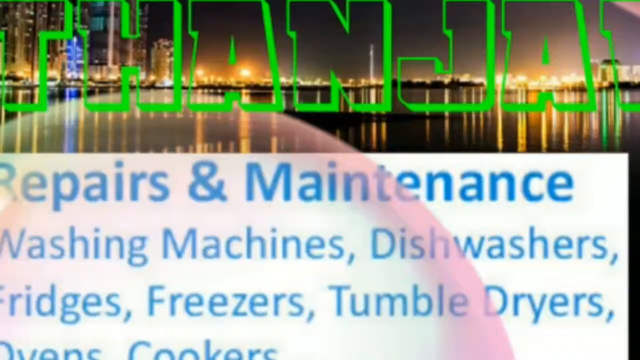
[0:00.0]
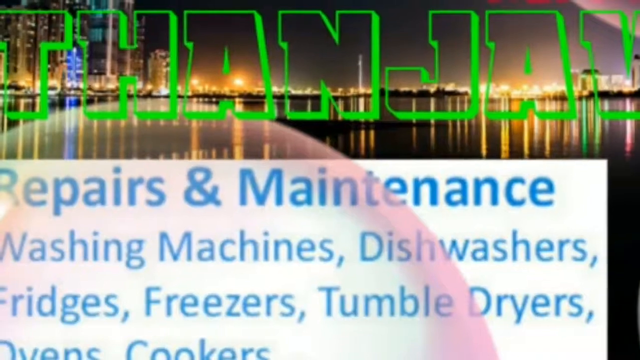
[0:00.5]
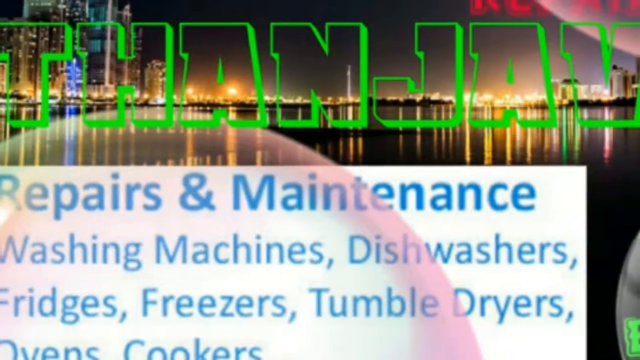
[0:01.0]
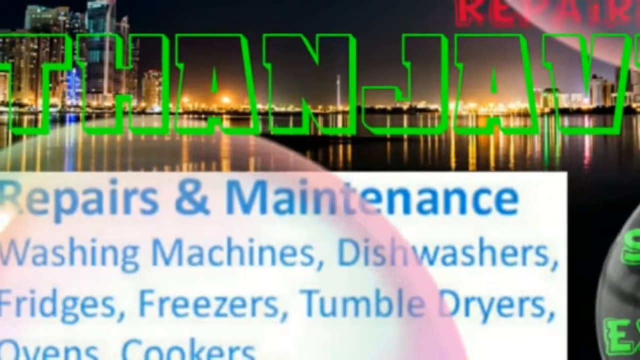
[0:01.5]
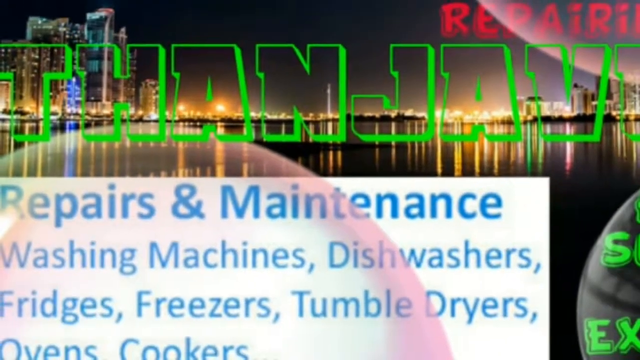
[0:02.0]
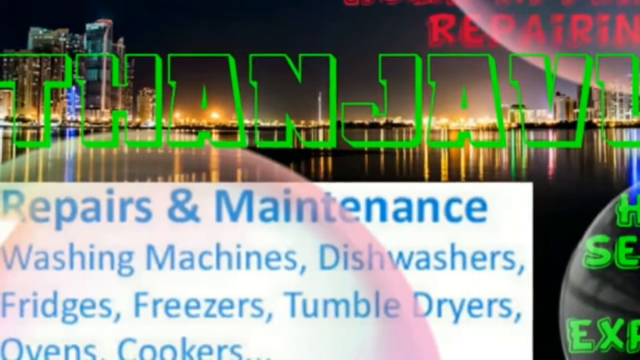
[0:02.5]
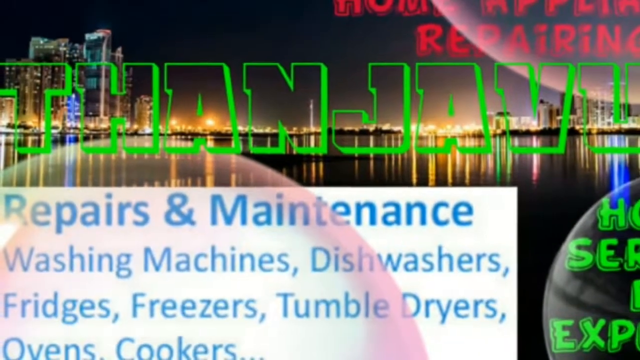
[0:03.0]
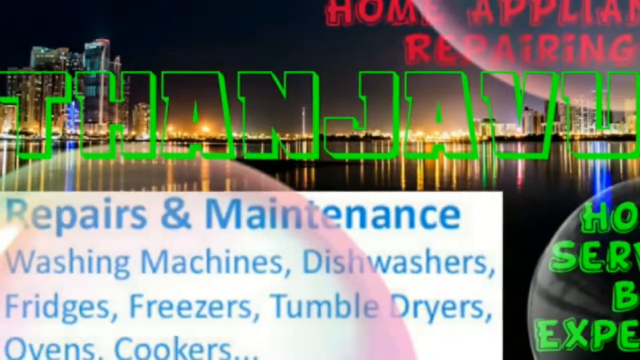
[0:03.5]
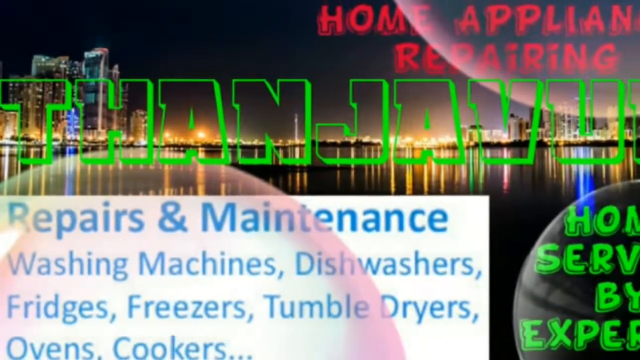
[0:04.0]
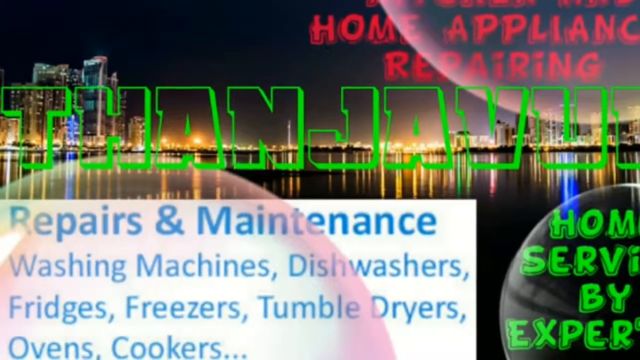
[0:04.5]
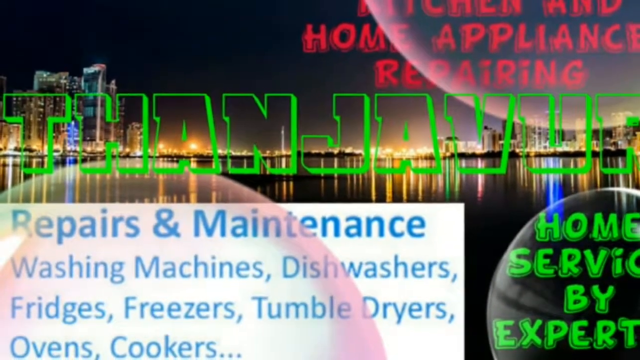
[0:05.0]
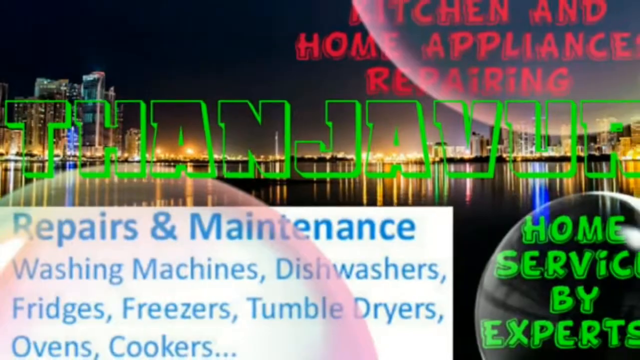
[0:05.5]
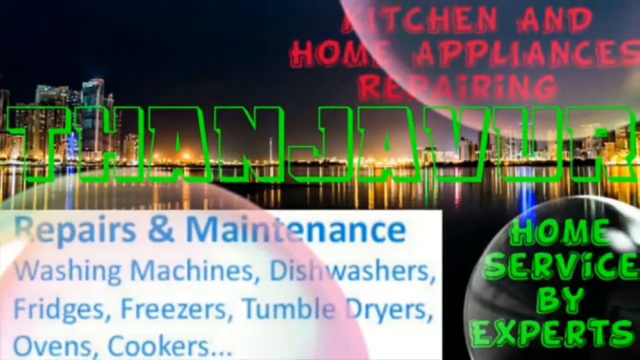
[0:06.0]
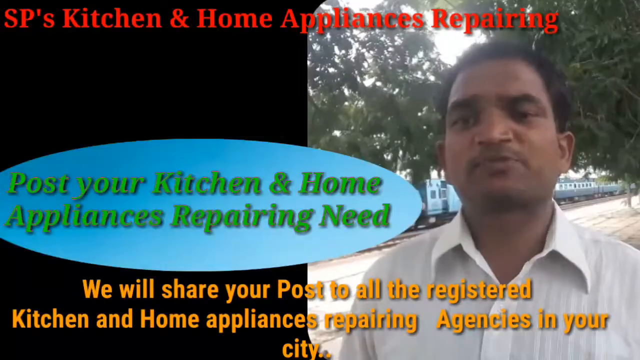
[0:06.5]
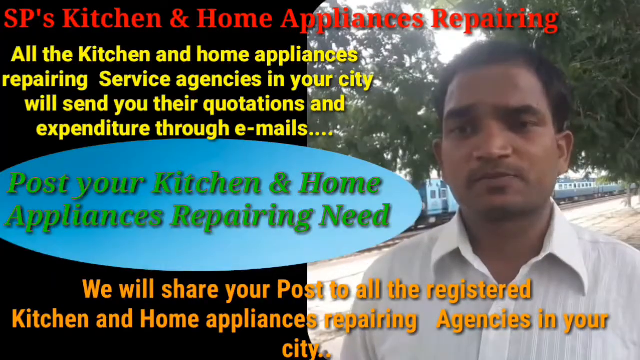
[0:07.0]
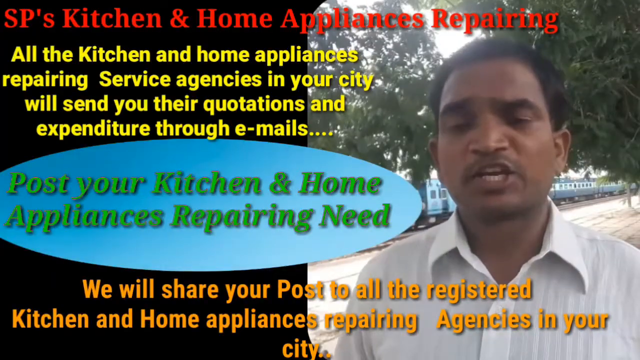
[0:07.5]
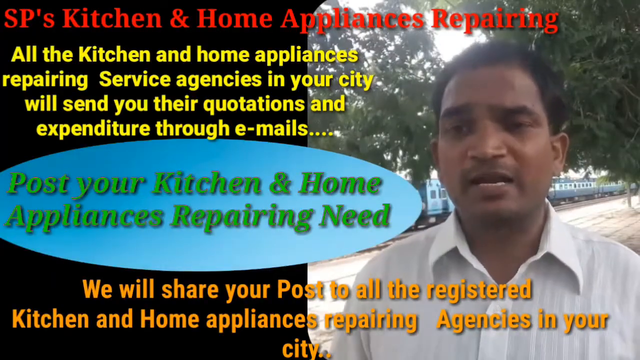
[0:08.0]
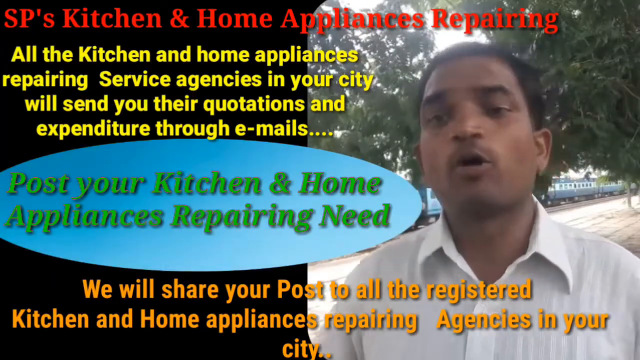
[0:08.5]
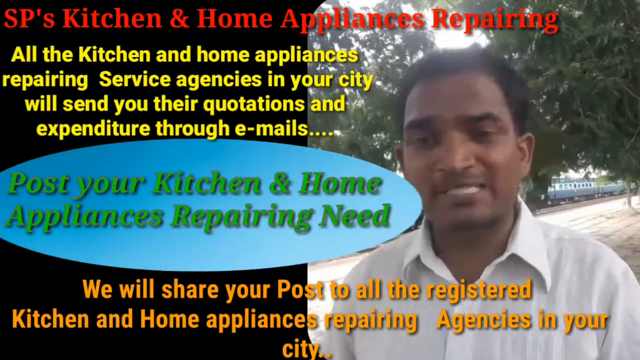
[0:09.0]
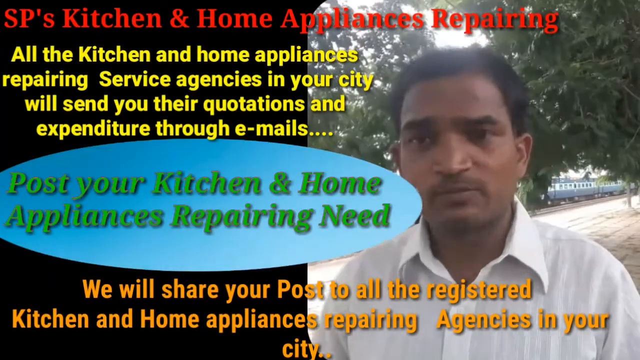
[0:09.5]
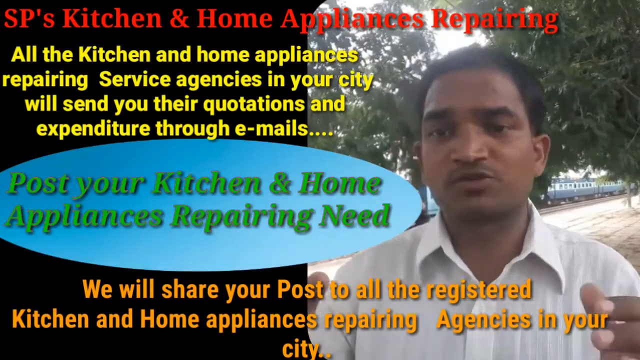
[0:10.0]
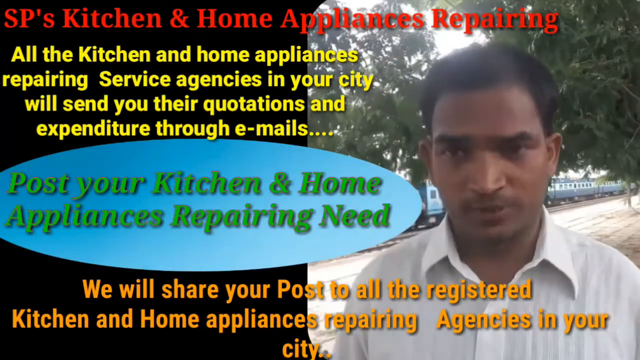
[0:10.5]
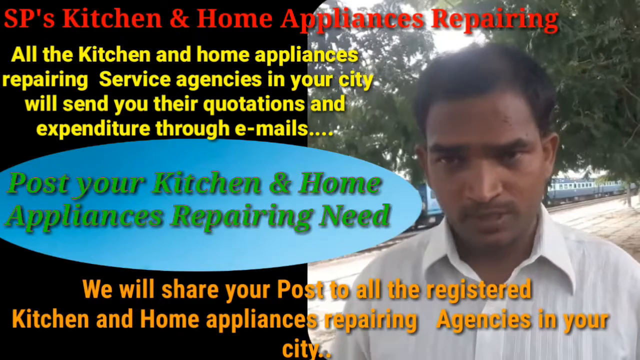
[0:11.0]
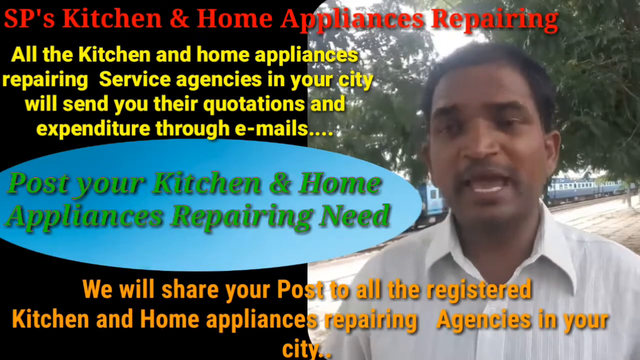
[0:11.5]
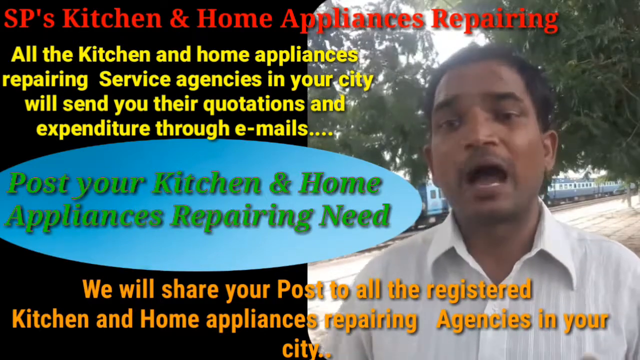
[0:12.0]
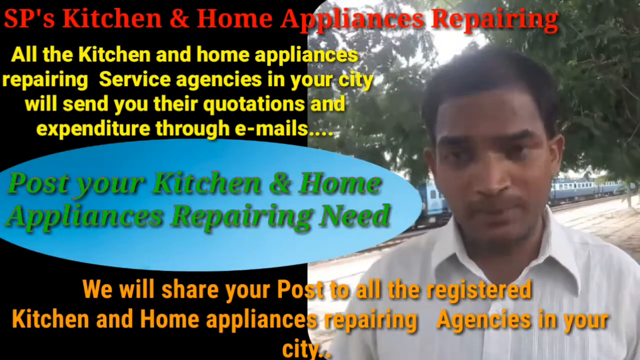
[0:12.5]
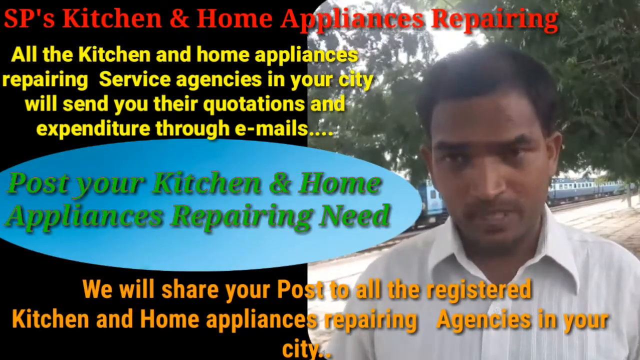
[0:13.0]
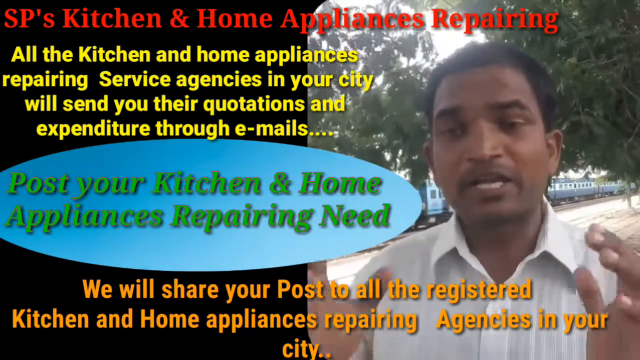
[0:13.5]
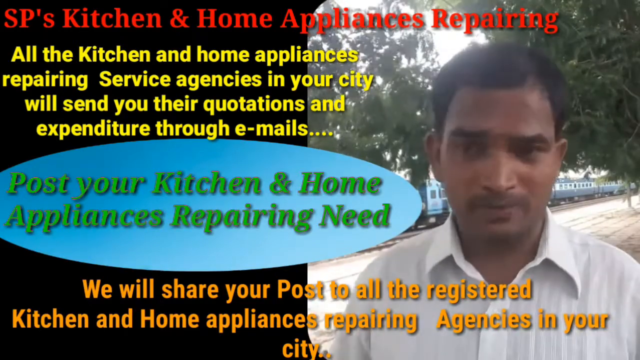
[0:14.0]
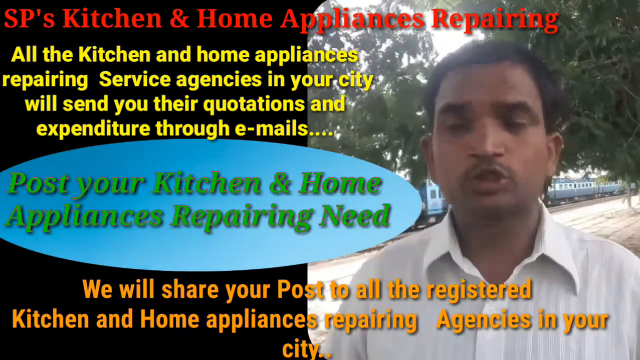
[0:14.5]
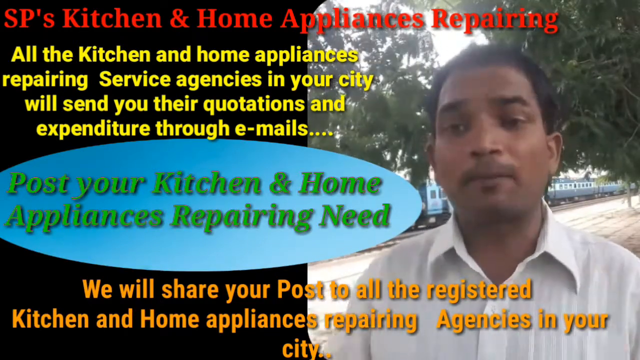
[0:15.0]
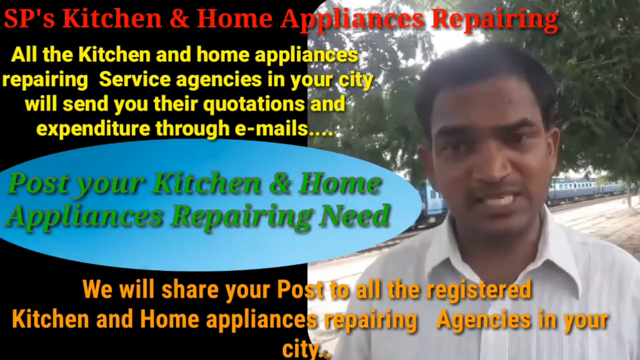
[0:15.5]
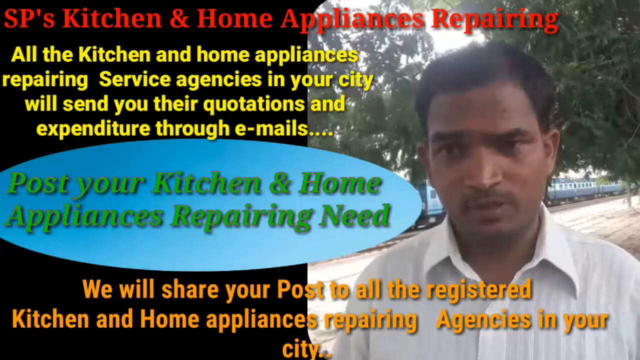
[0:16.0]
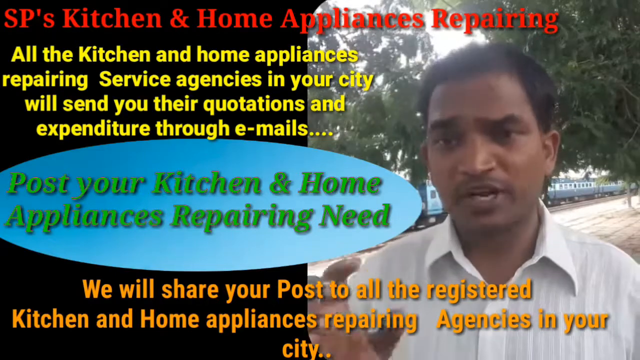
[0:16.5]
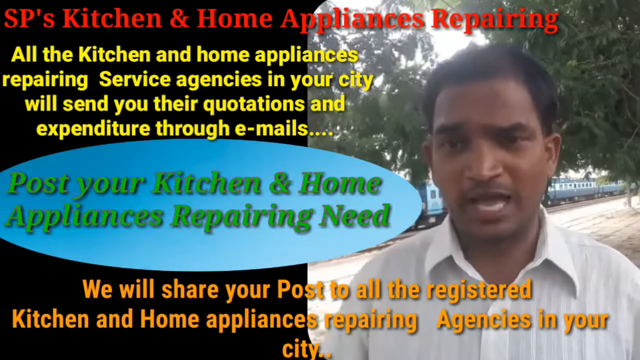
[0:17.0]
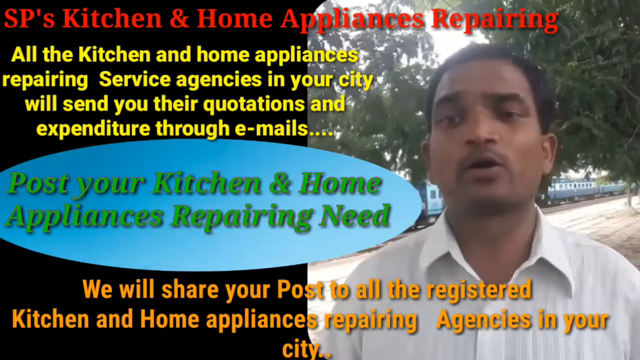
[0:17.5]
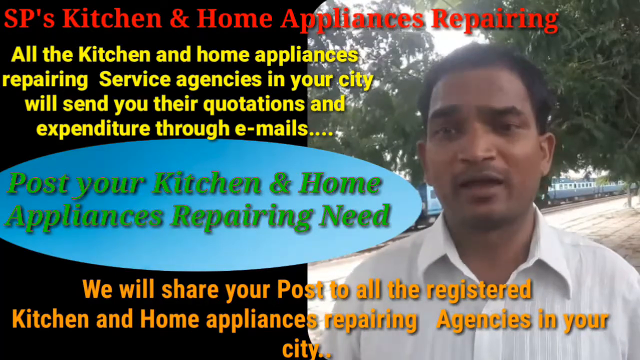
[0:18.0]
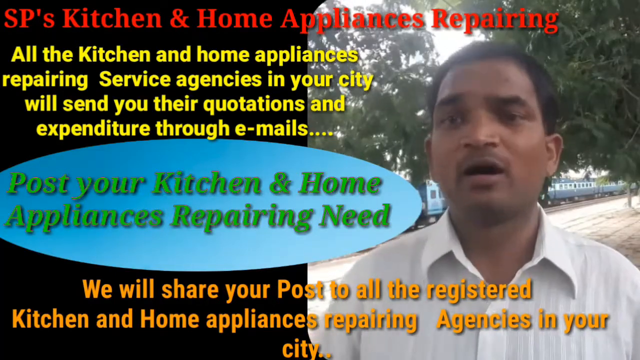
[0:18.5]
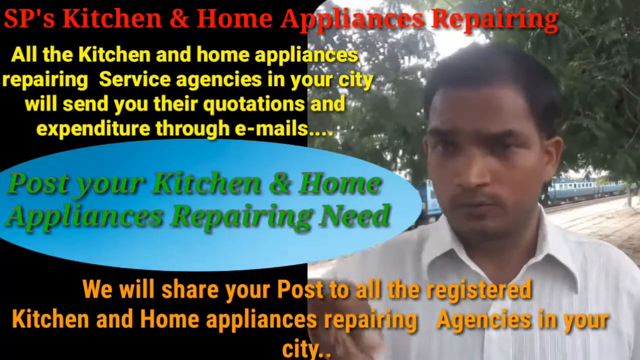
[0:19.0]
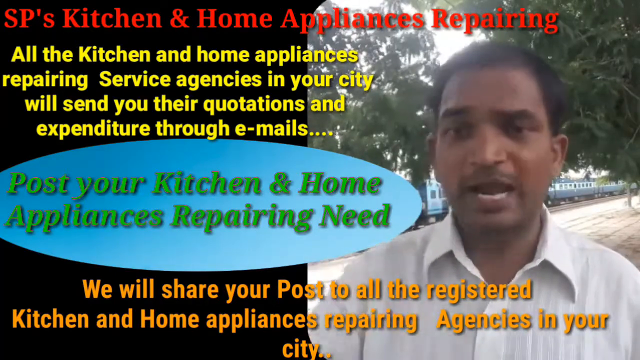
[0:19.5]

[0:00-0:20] The video opens on what looks like some sort of PowerPoint or poster. It reads "repairs and maintenance washing machines dishwashers fridges freezers tumble dryers ovens and cookers" and "home services by experts." It then cuts to a man talking, with text on screen reading "we will share your post to all registered kitchen and home appliances repairing agencies in your area," "post your kitchen and home appliances repairing needs," and "all the kitchen and home appliances repairing services in your city will send you their quotation and expenditure through emails." The text appears in different colors and fonts, including yellow, green and orange, and an oval in the center has text about home appliances. The man continues to talk.